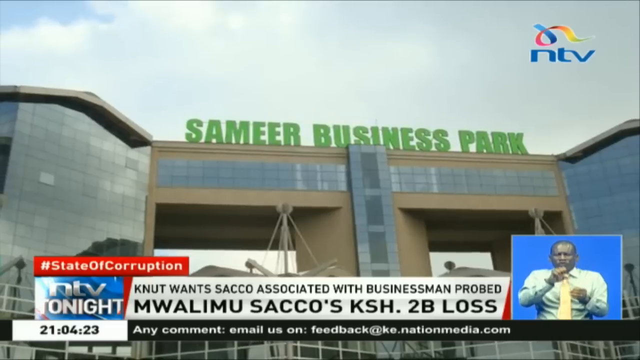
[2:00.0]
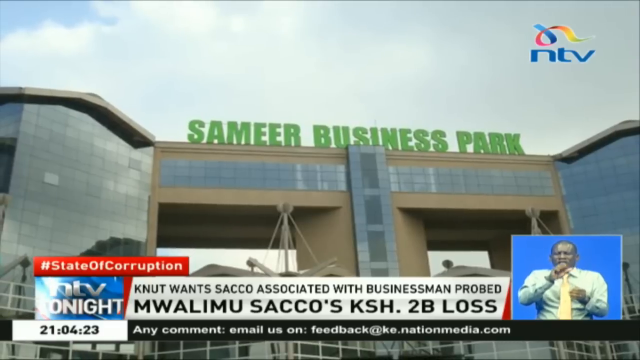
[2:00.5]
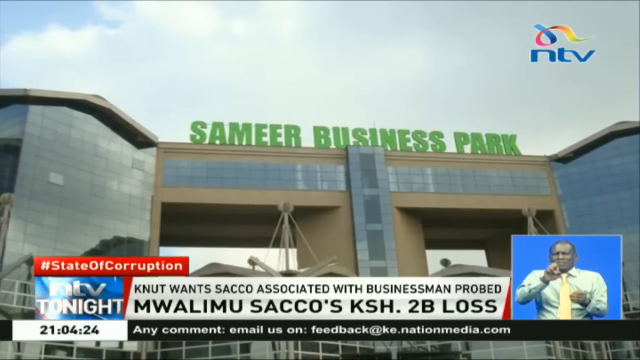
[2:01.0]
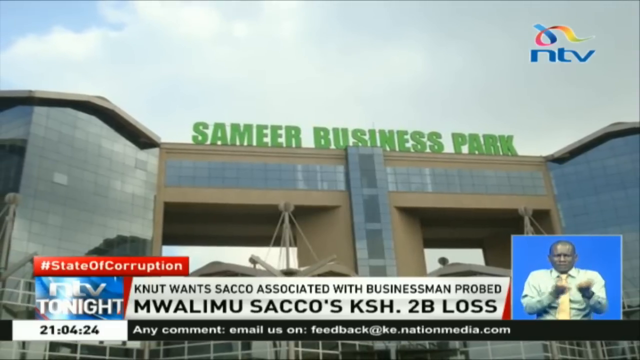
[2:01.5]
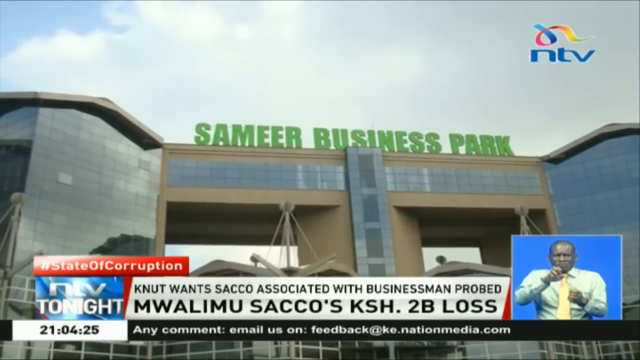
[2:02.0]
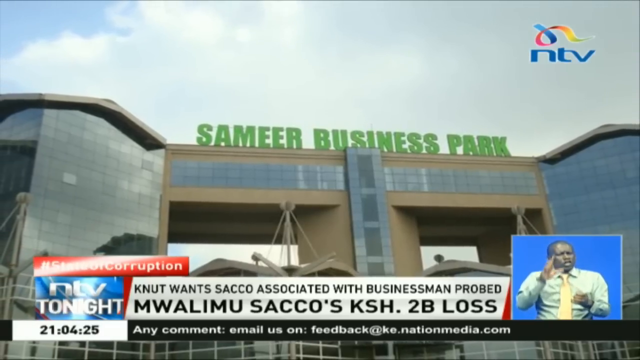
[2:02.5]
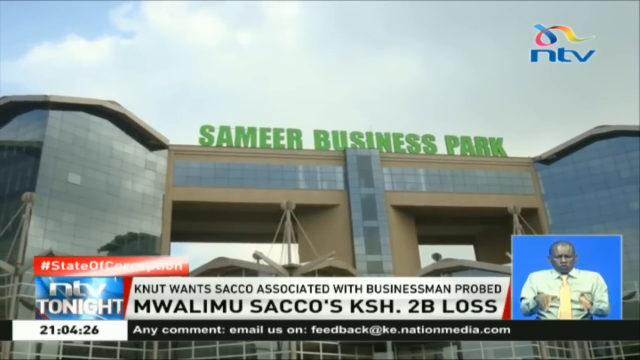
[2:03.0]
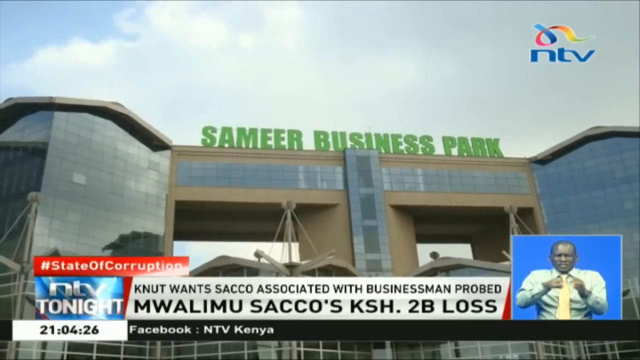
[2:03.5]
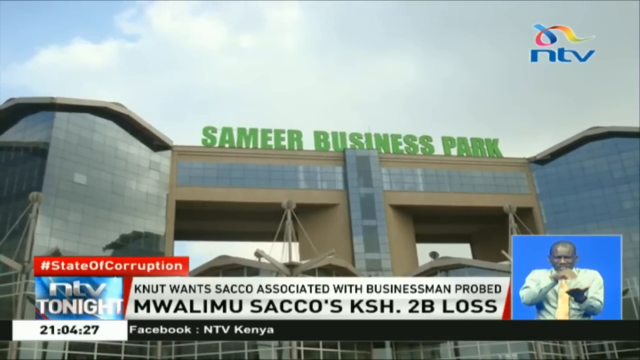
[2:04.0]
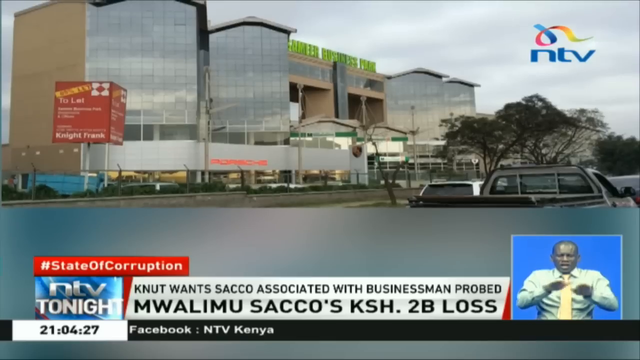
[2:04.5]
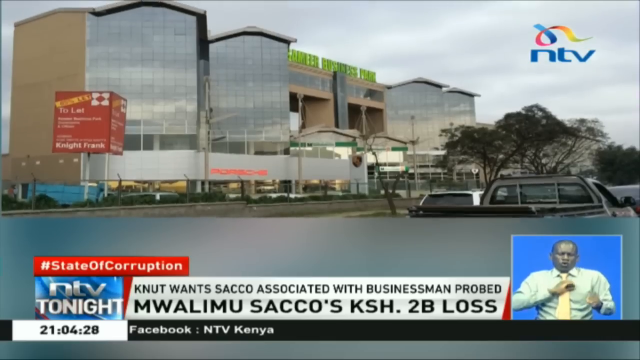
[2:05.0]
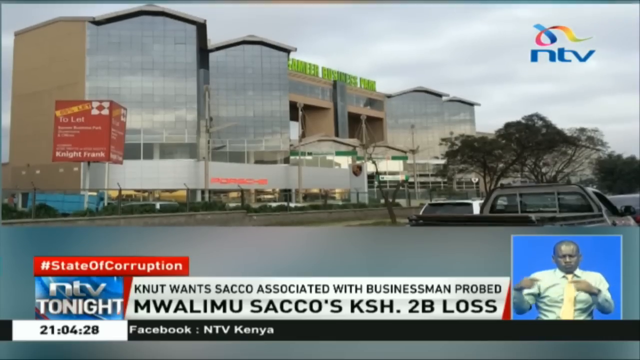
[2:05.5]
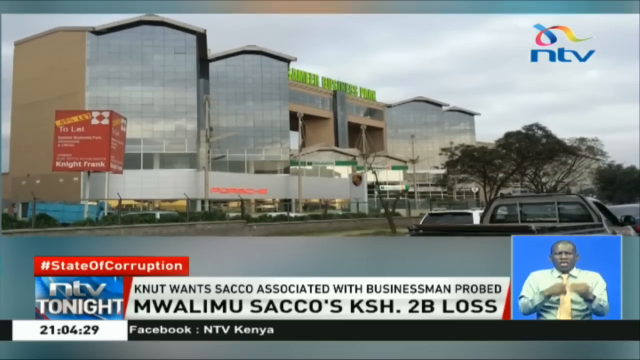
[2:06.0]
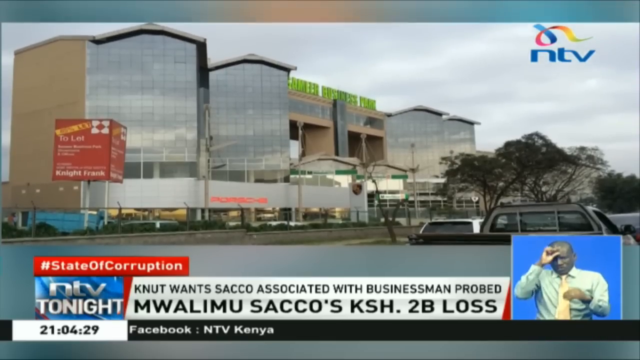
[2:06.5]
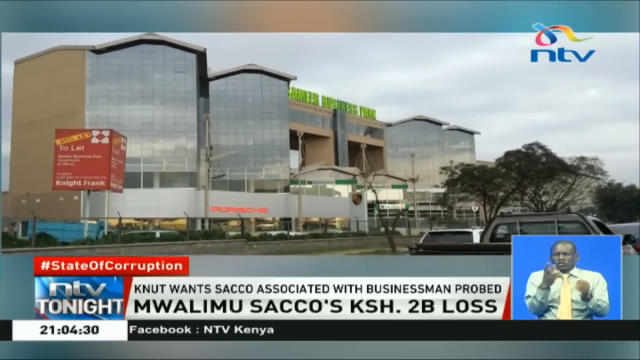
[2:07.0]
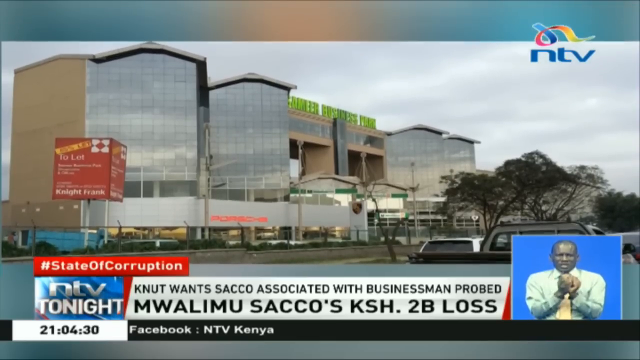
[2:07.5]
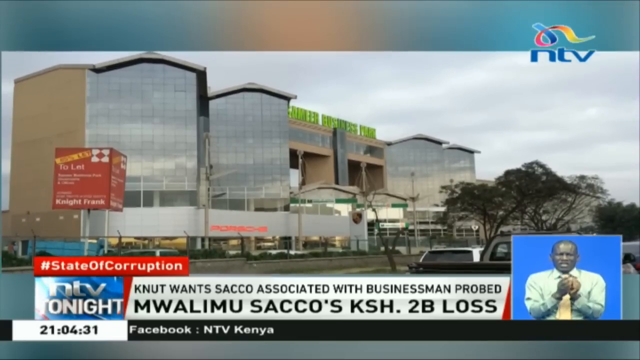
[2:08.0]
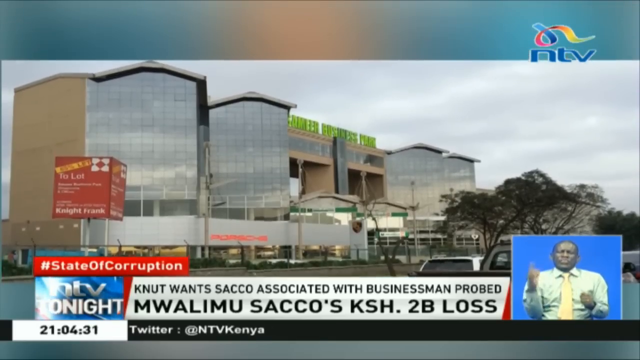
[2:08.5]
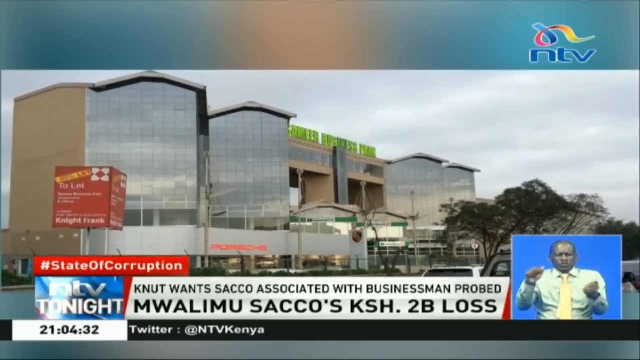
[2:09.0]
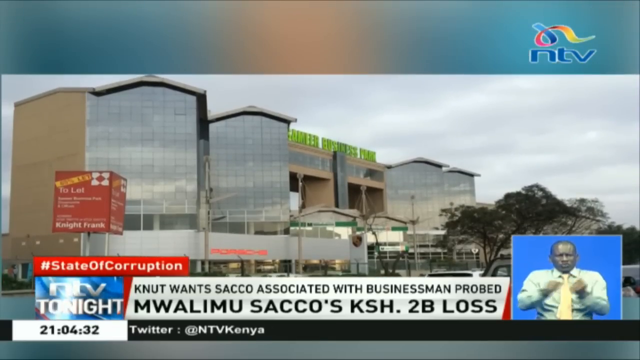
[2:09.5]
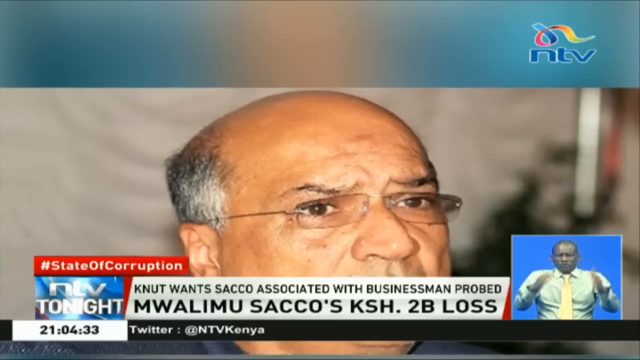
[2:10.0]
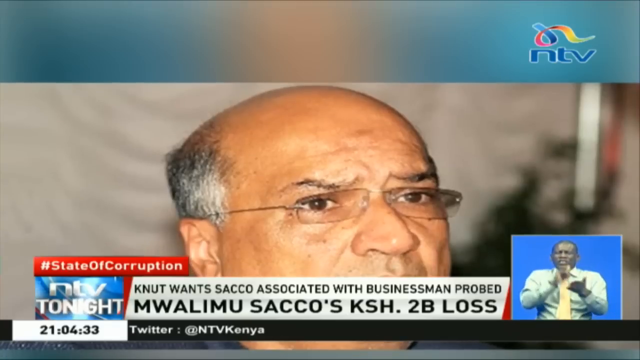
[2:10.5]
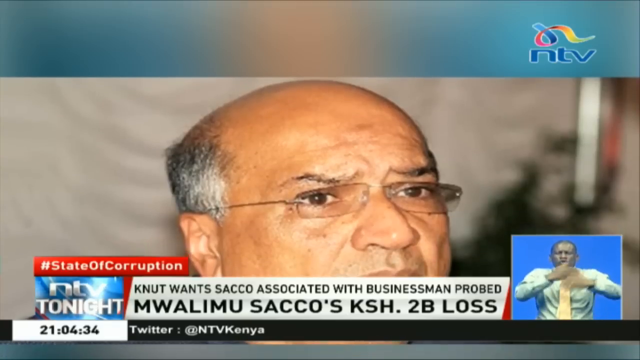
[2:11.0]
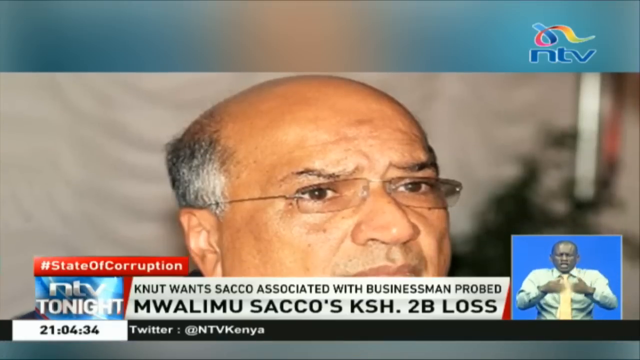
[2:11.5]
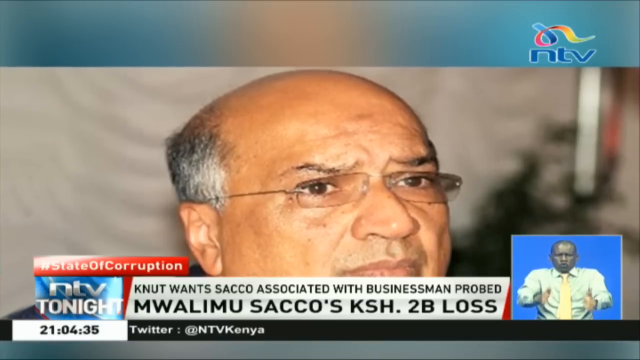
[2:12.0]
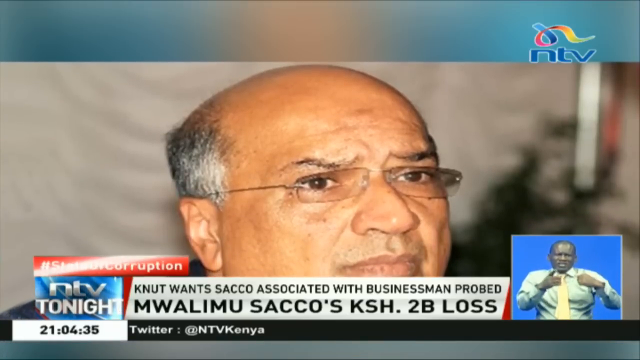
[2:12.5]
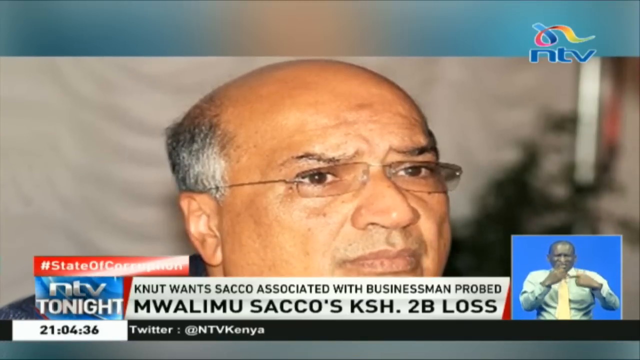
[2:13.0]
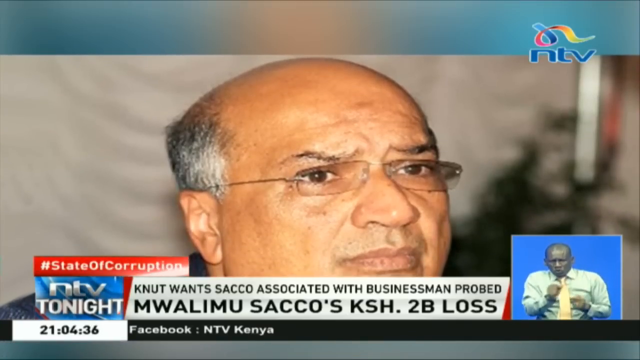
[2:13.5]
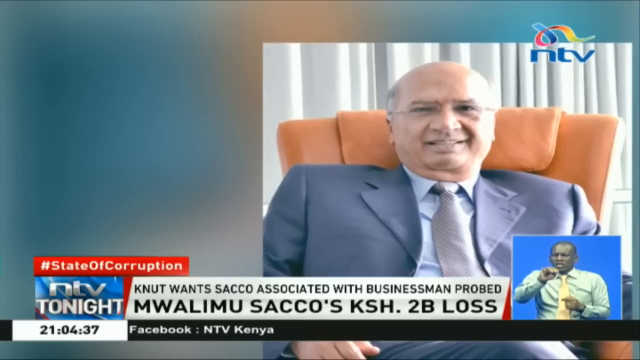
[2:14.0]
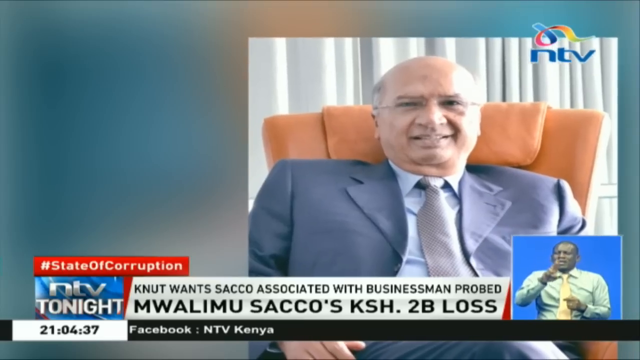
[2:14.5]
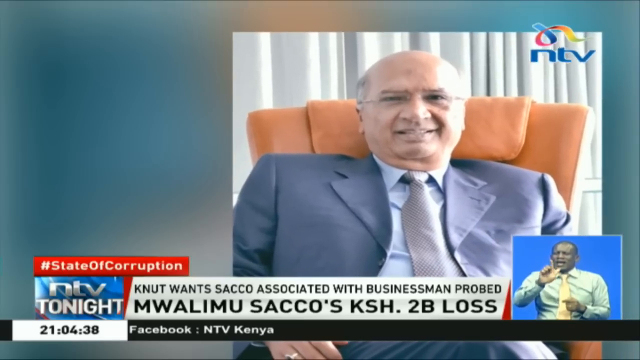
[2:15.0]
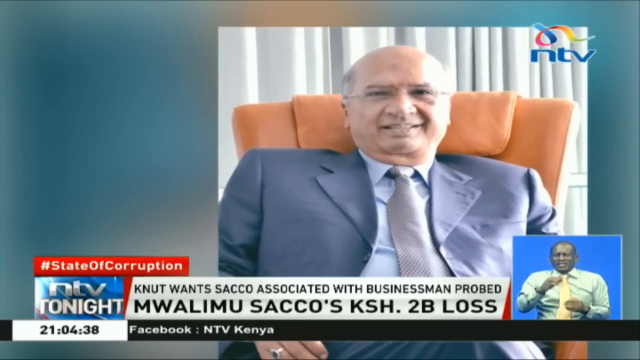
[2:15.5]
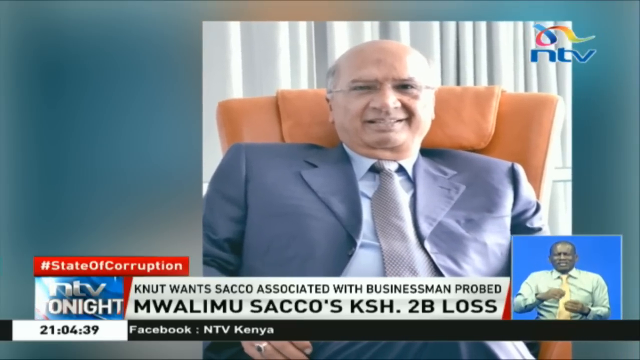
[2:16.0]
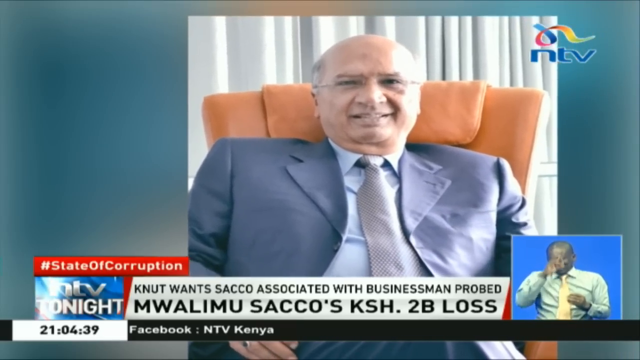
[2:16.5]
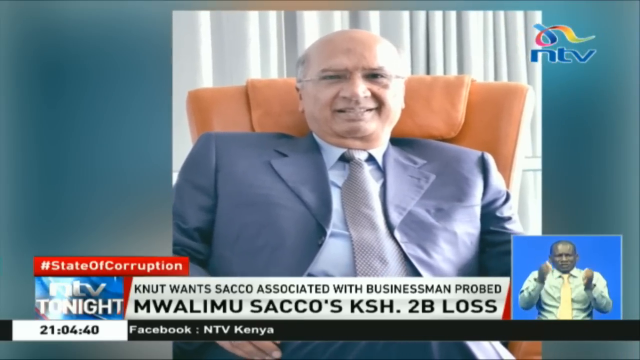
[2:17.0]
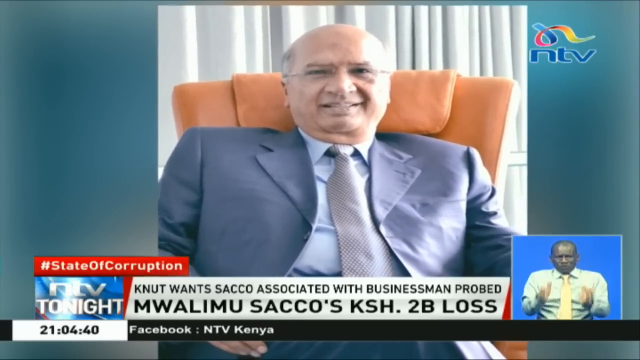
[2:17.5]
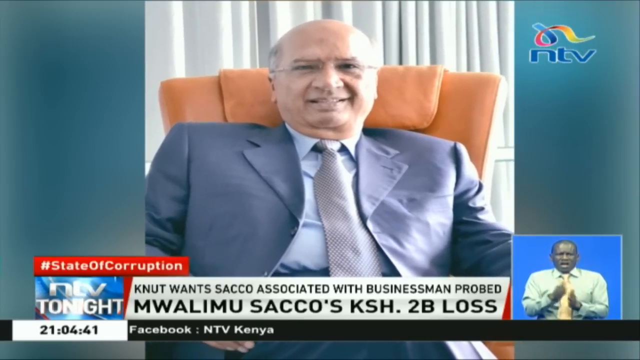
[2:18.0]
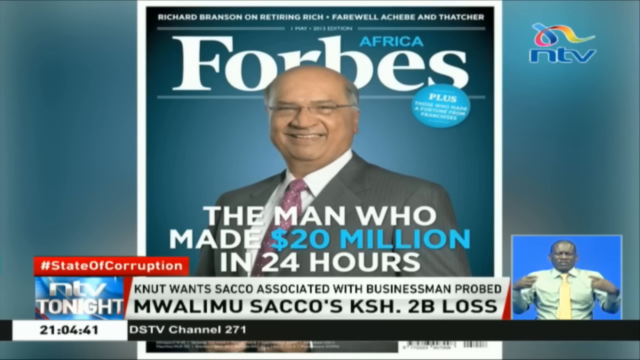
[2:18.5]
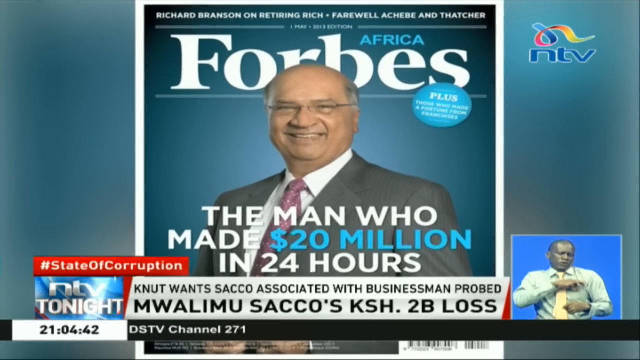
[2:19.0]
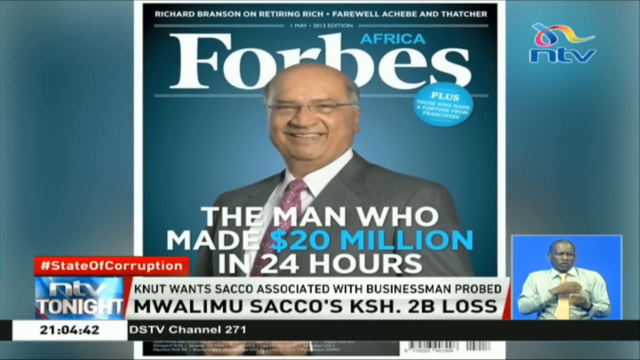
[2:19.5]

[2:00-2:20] On NTV, the blue NTV emblem with a curling ribbon above it is in the upper right corner of the screen. A big green sign at the top of a building reads "SAMEER Business Park". Below are "State of Corruption", then "NTV Tonight", then "The Time". To the right is "KNUT wants SACO associated with businessman probed", and beneath it, in big black letters, "MWALIMU SACCOs KSH 2 billion loss". To the right, a screen shows a person doing sign language against a blue background: an African man in his 50s wearing a white shirt and yellow tie. Underneath, white letters on a black background read "Any comment, email us on feedback at ke.nationmedia.com".